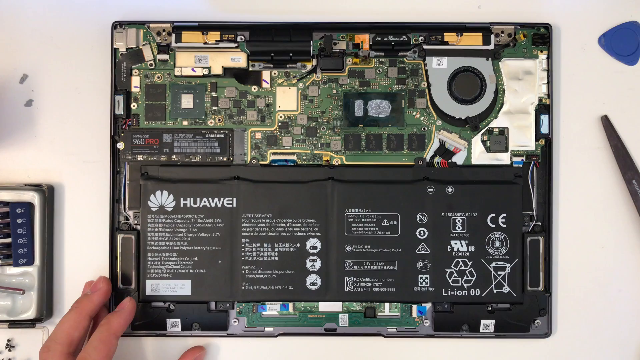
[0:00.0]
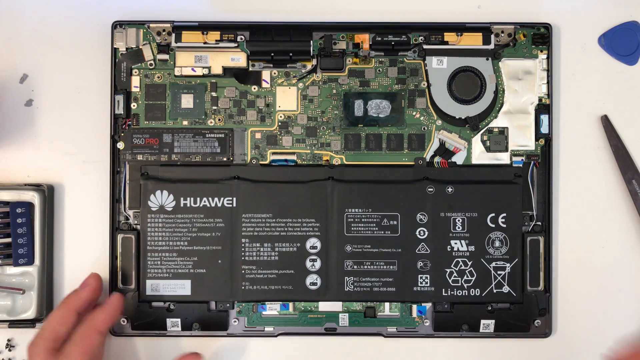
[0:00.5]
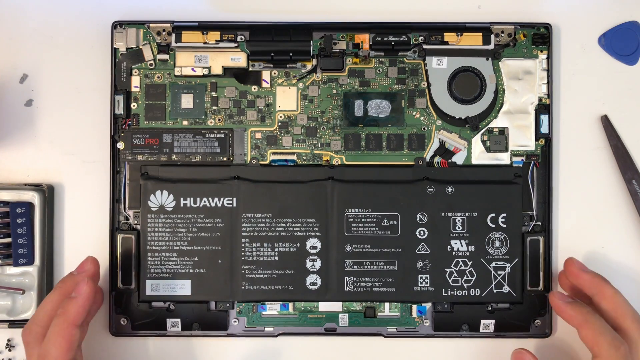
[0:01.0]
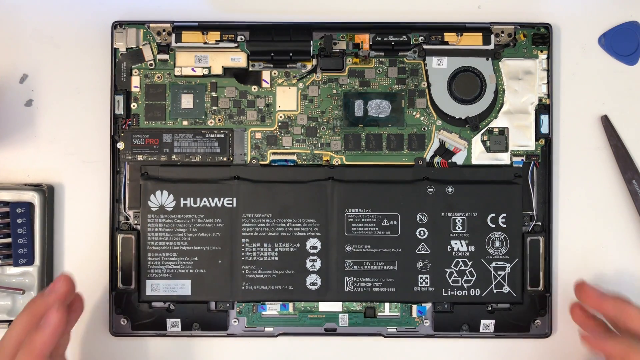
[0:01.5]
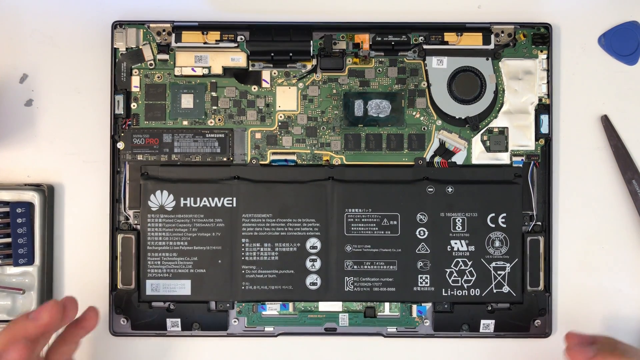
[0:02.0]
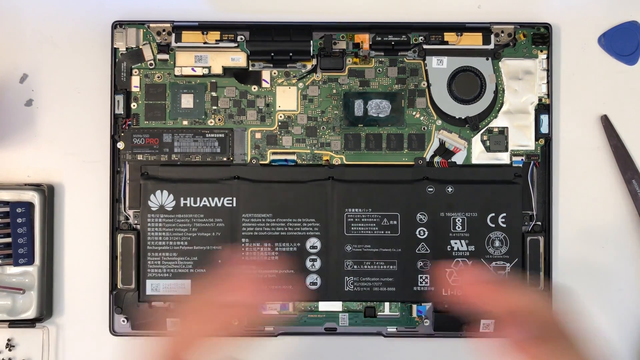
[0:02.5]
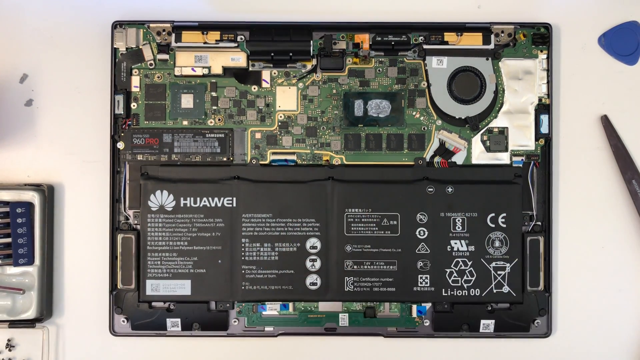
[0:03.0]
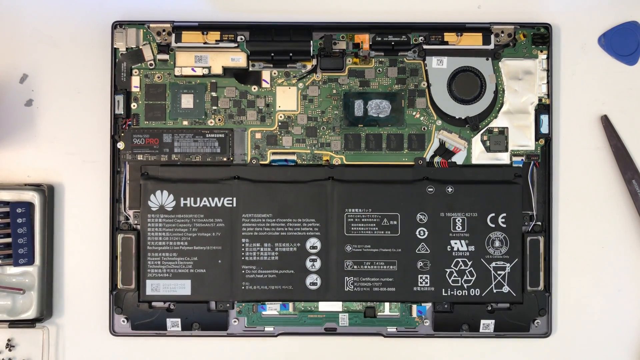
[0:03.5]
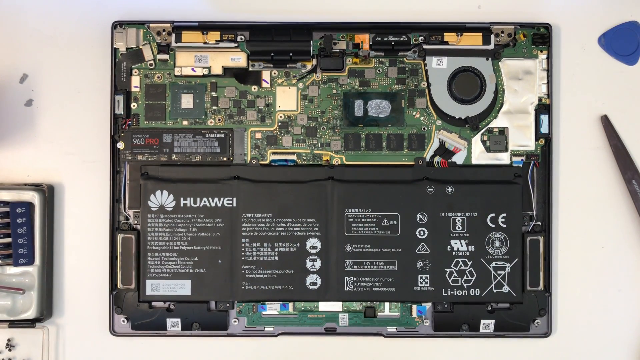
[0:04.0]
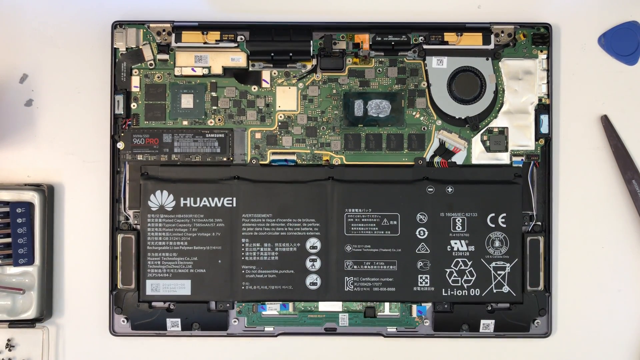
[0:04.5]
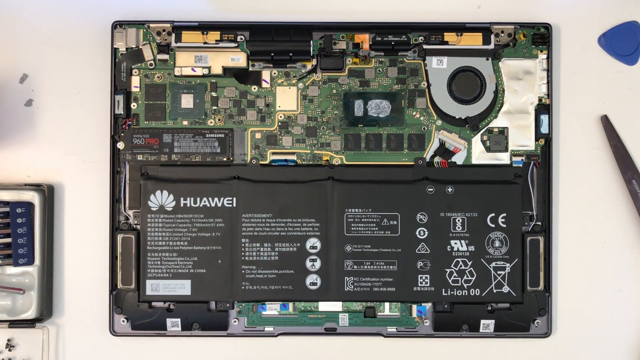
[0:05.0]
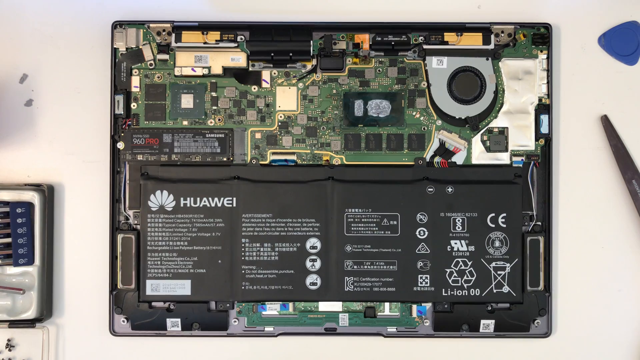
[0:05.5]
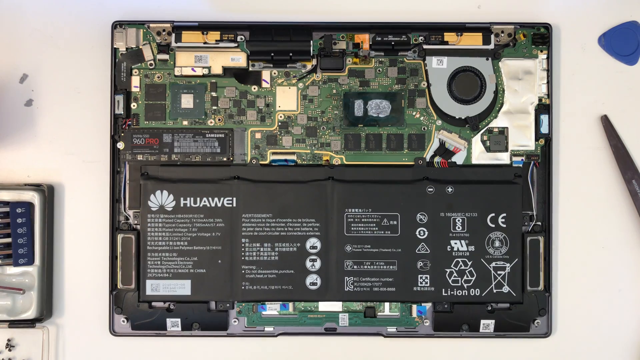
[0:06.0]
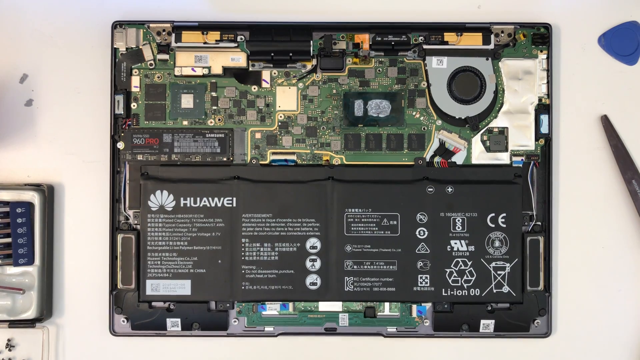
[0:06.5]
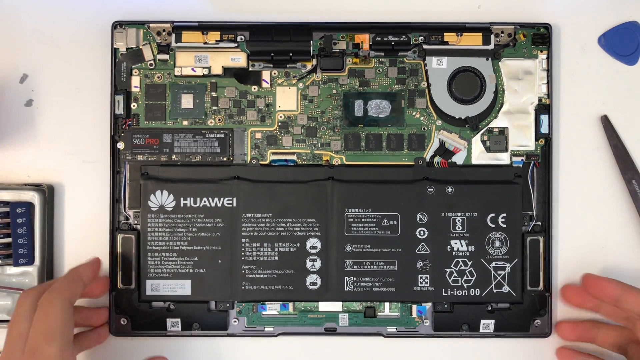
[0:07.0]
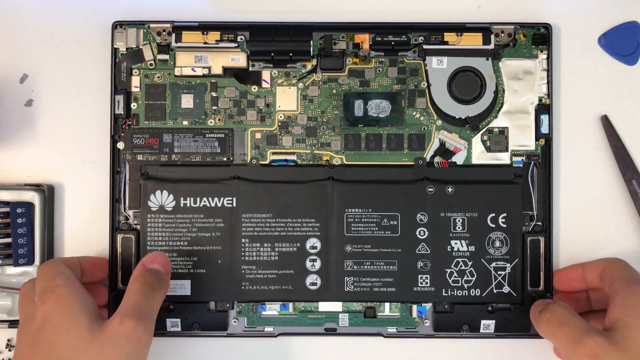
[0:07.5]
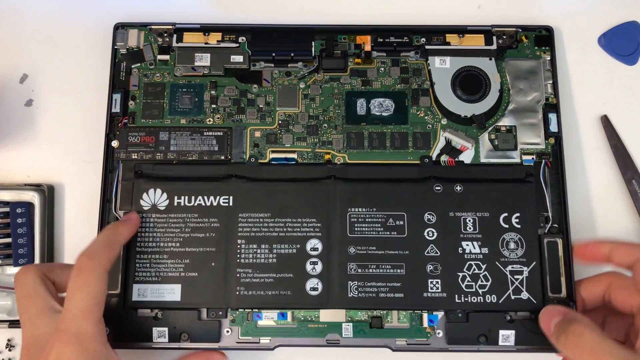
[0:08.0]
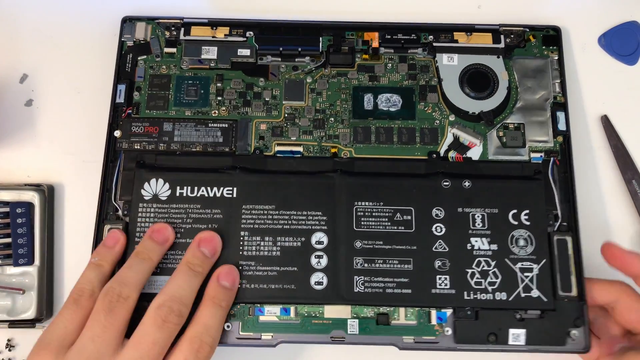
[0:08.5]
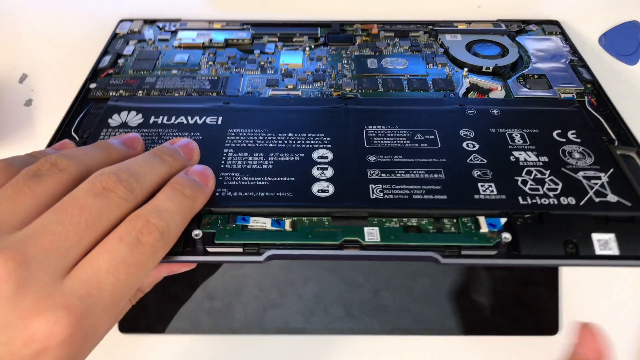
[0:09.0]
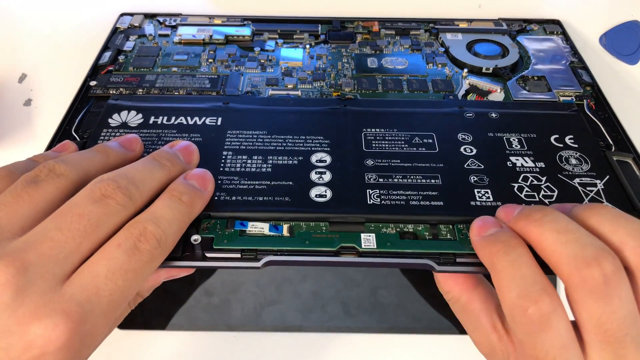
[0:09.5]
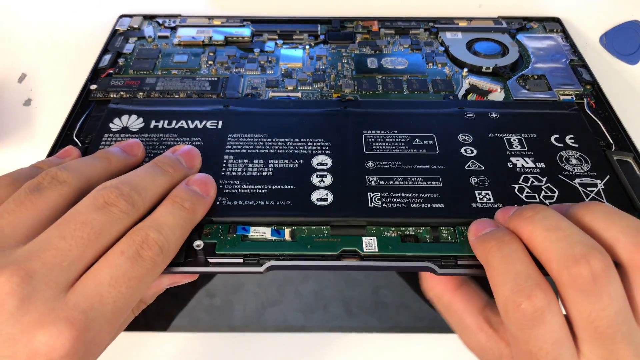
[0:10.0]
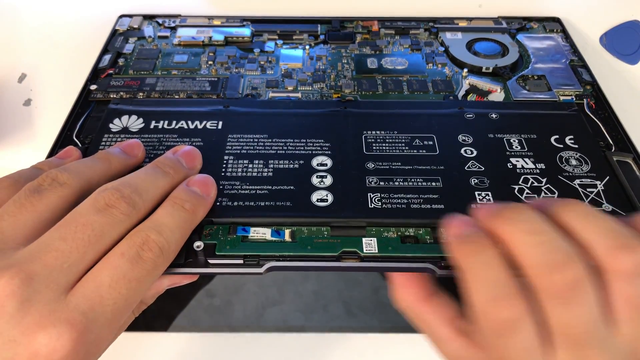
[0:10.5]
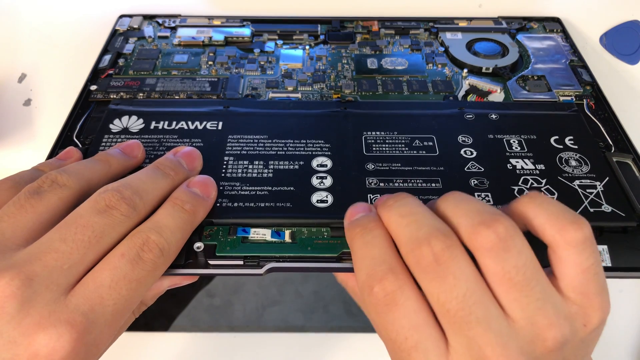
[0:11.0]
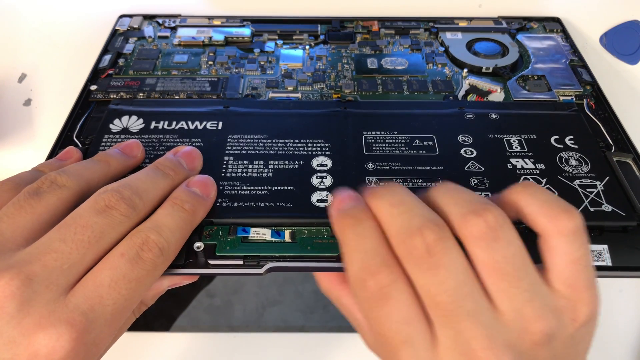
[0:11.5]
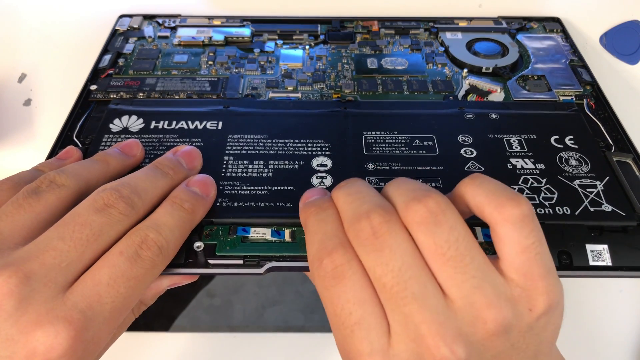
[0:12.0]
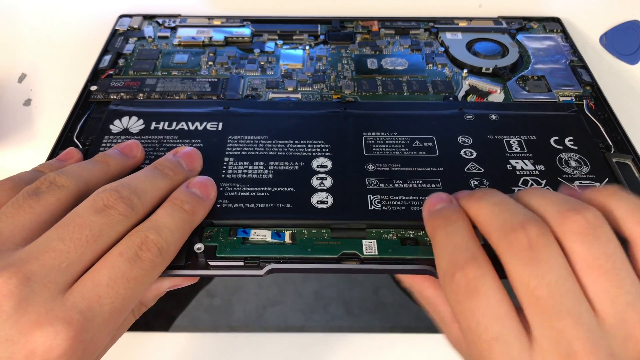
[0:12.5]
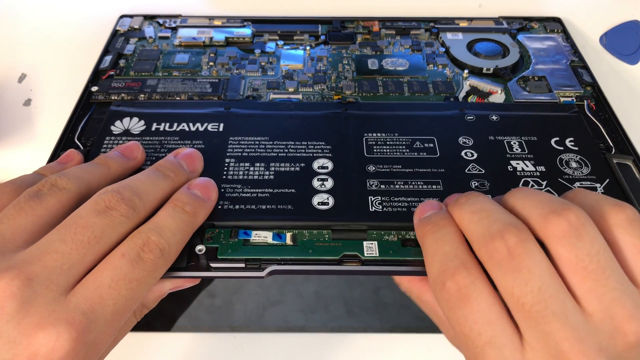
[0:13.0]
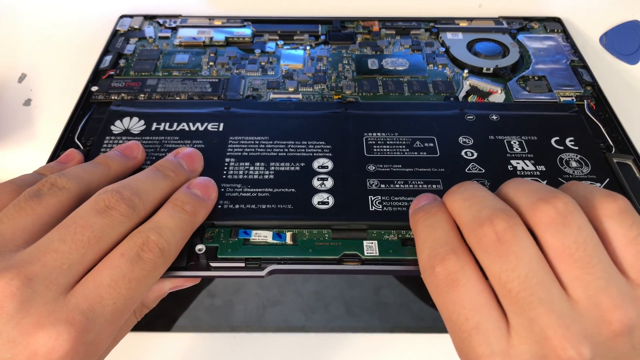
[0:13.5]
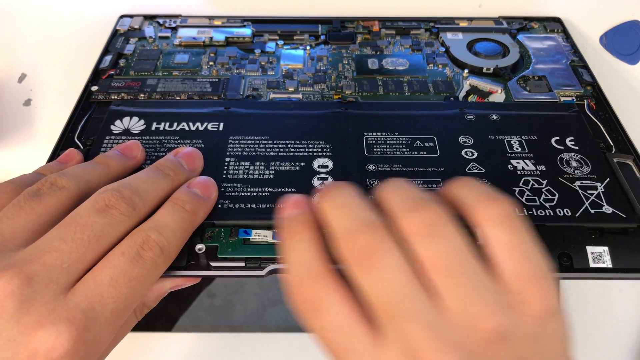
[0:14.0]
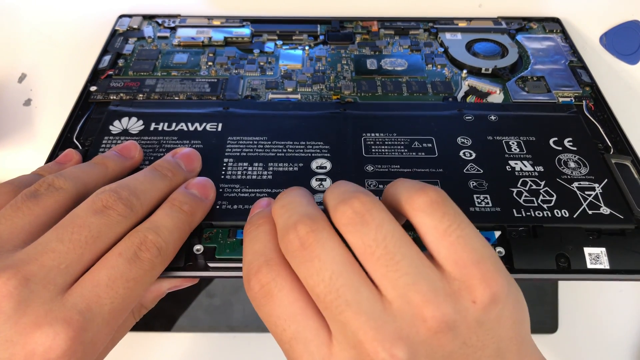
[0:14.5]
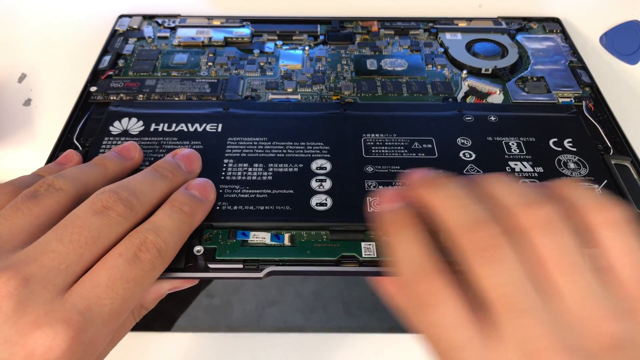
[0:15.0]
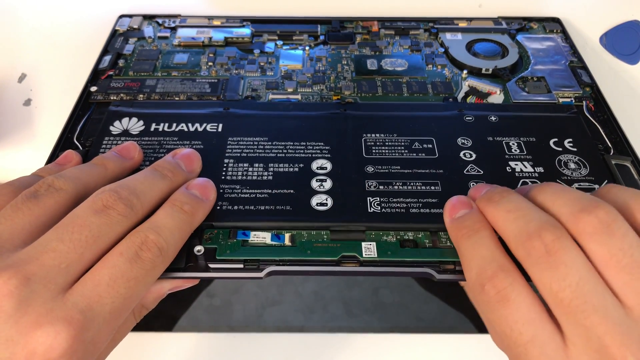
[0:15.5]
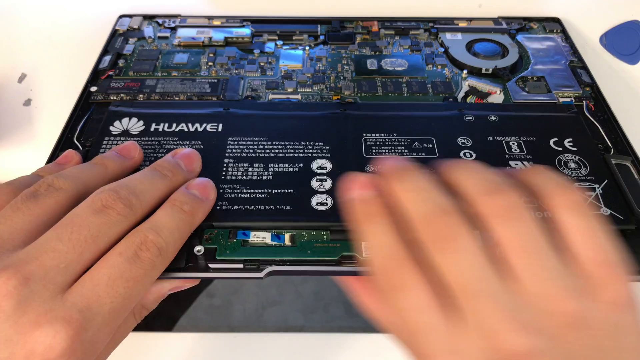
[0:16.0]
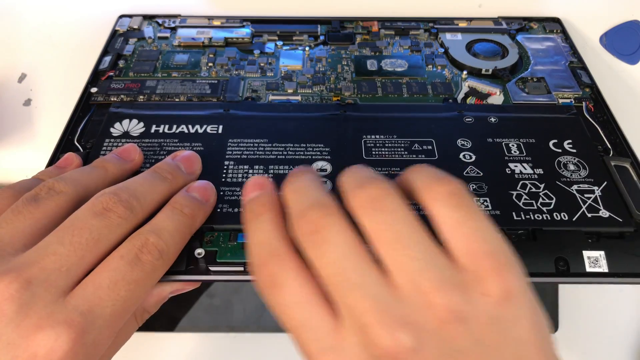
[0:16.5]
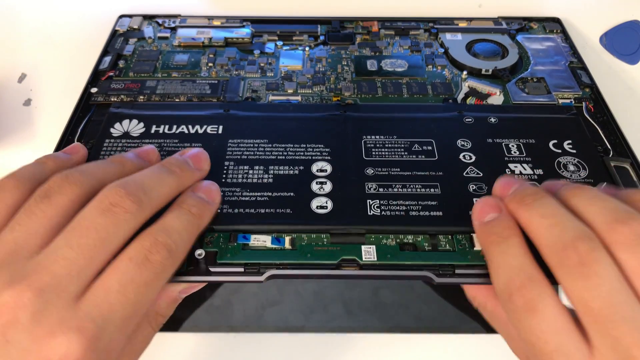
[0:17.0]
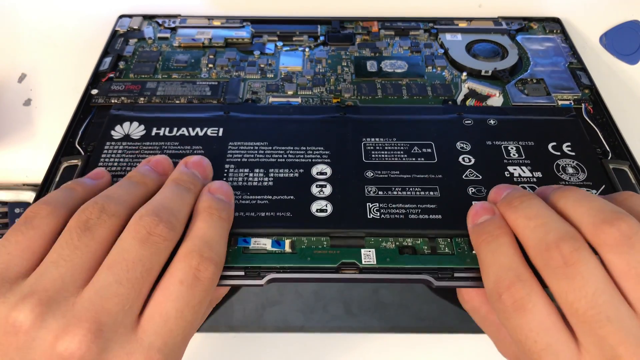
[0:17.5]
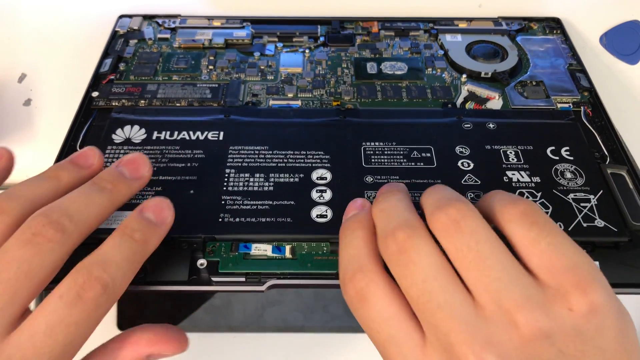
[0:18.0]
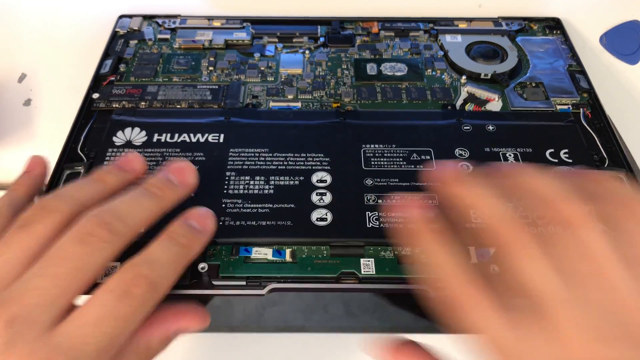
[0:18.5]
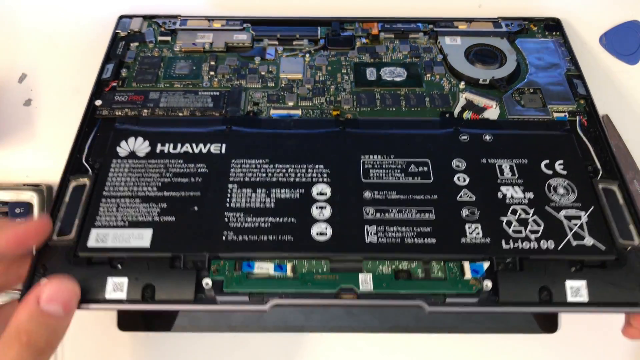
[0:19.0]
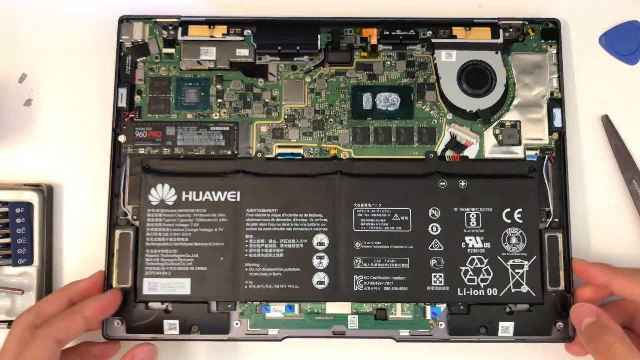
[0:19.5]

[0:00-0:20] A laptop that has been taken apart is visible, with its electrical wiring and battery exposed. The edge of a pair of scissors can be seen, along with a triangle-shaped plastic piece. On the left side of the frame, next to the computer, there is a gray, white and blue item. The person recording touches the outside edges of the laptop, puts their hands together, then places them back on the computer and lifts the top of the screen up. The right hand does most of the moving and touching while the left hand holds steady. With the right hand, they push their thumb on the underside of the screen, moving from the right side toward the center. They push on the center three or four times, move about an inch, push three or four times, then move back toward the right and push three or four times again. They return to the center and go a little further to the left, then back to the right and back to the center. Their left hand then starts moving on the left side of the screen, doing a wiggling, wobbly pressing, and then they close the computer back down toward the table.